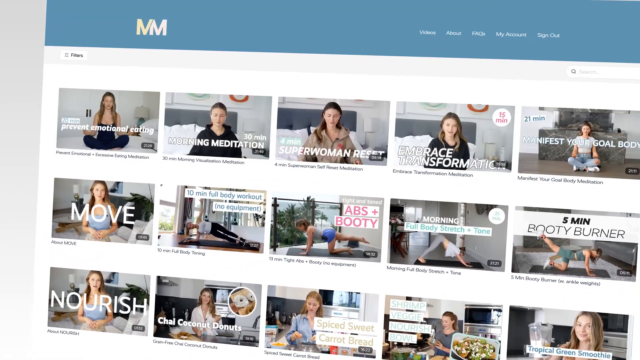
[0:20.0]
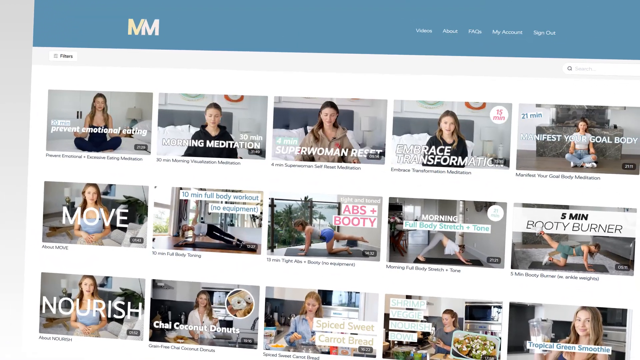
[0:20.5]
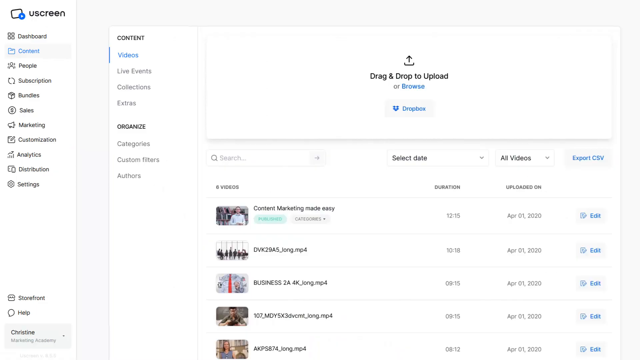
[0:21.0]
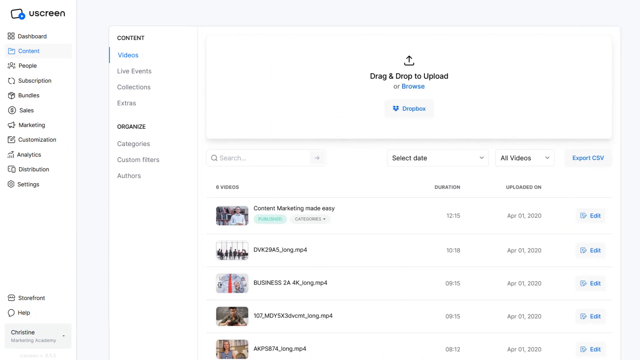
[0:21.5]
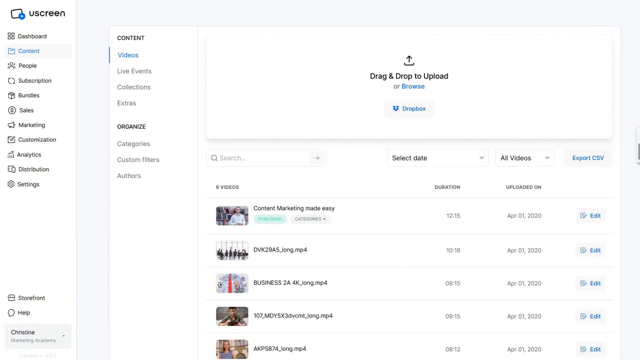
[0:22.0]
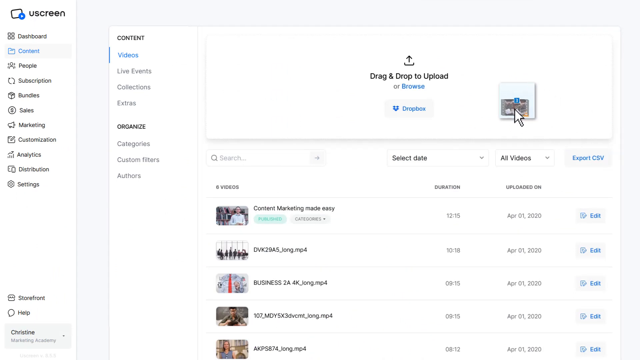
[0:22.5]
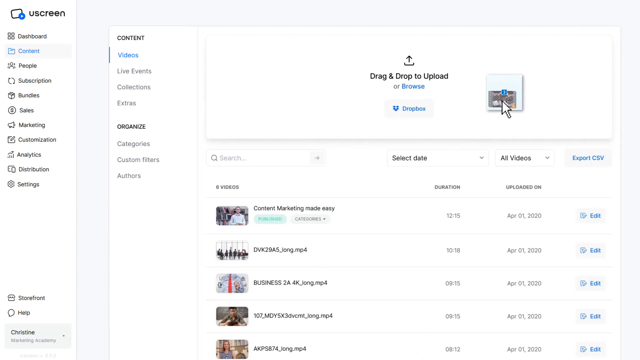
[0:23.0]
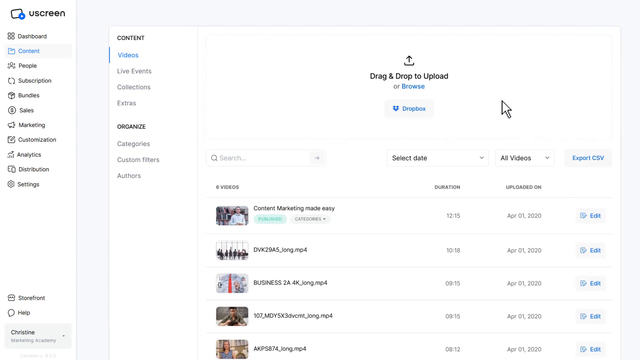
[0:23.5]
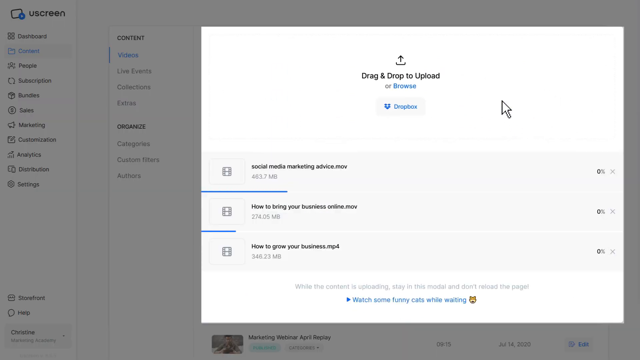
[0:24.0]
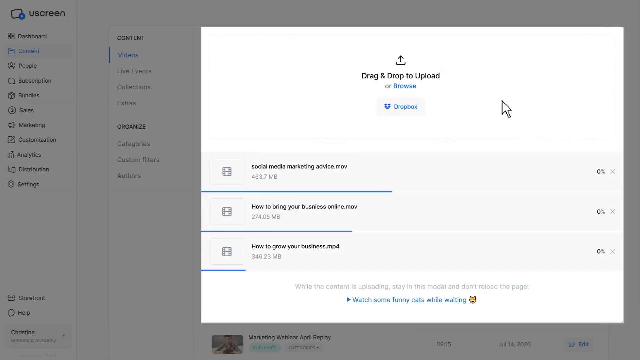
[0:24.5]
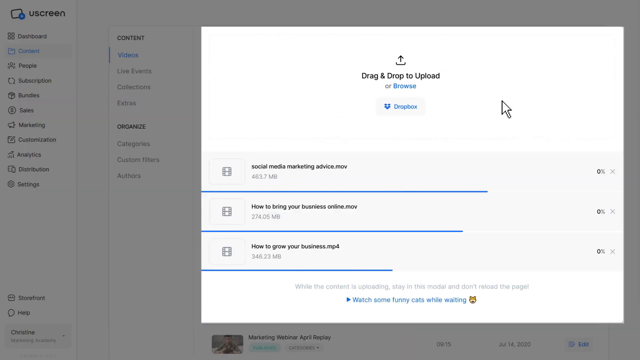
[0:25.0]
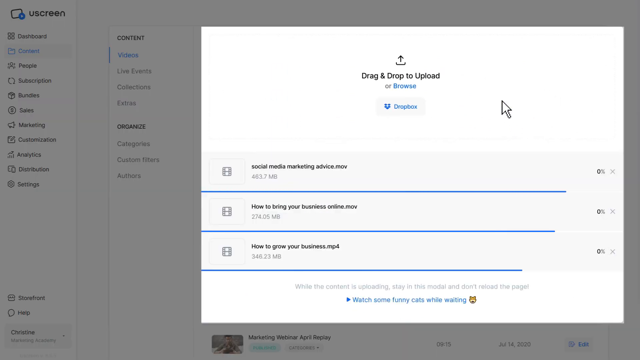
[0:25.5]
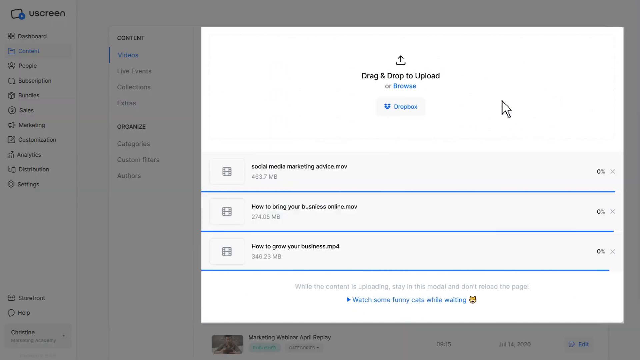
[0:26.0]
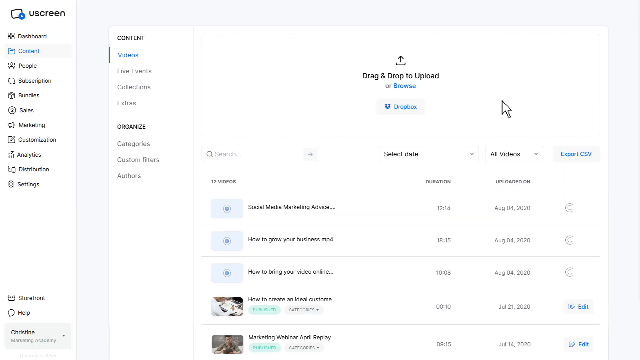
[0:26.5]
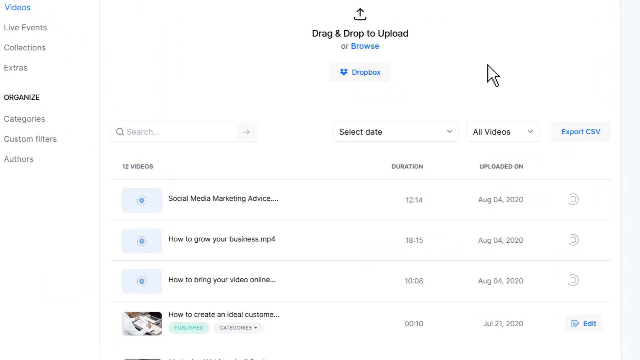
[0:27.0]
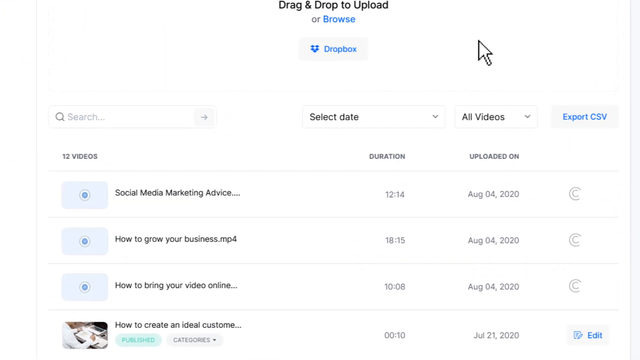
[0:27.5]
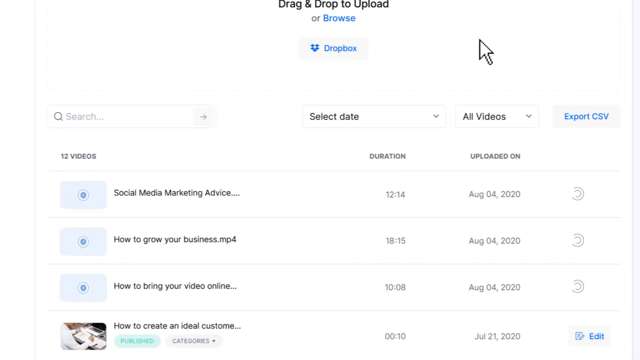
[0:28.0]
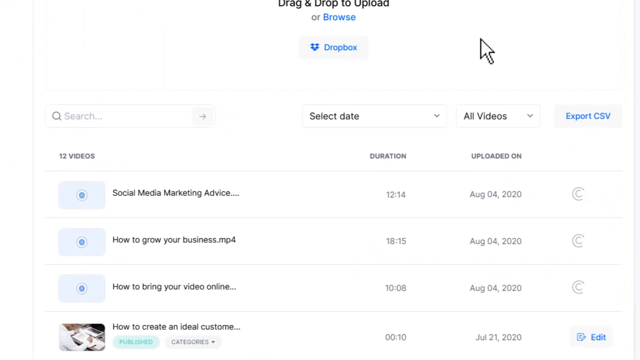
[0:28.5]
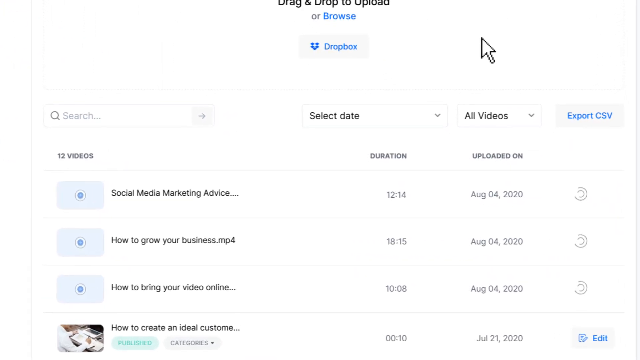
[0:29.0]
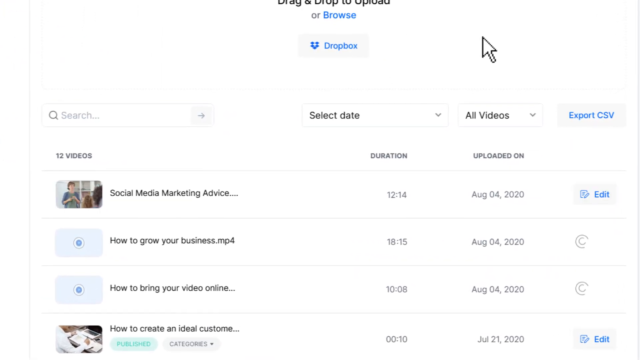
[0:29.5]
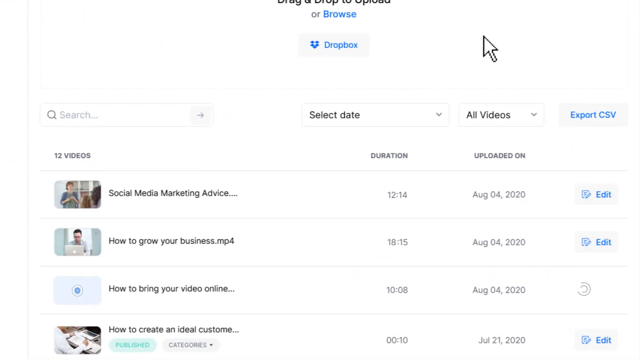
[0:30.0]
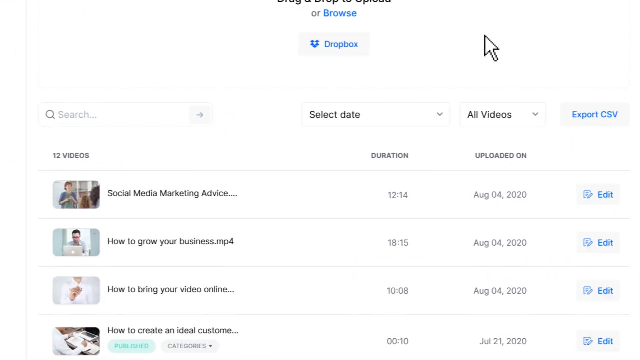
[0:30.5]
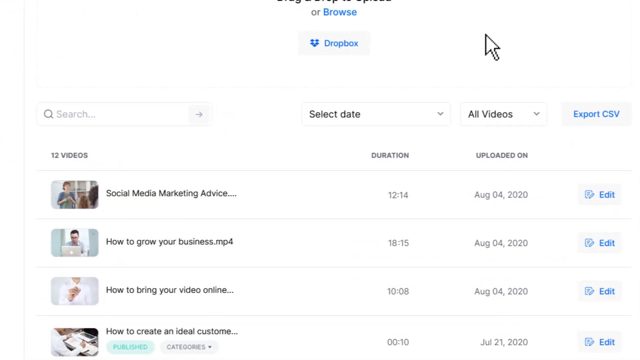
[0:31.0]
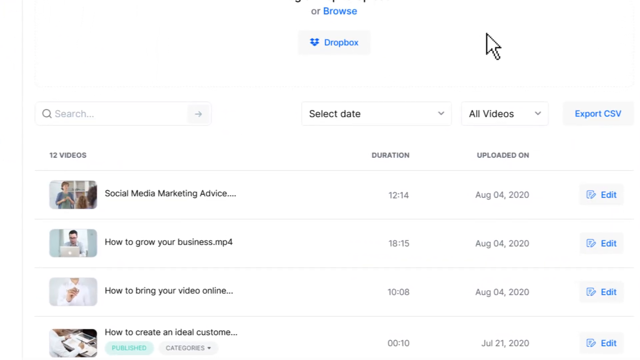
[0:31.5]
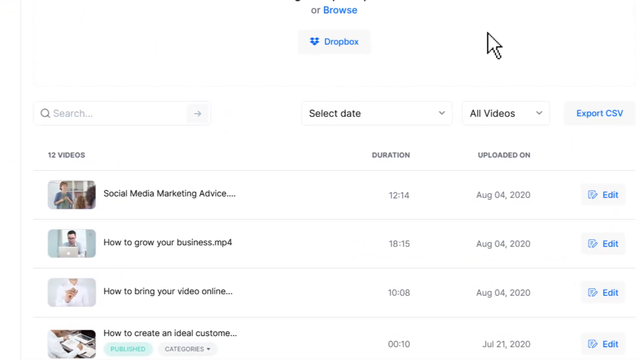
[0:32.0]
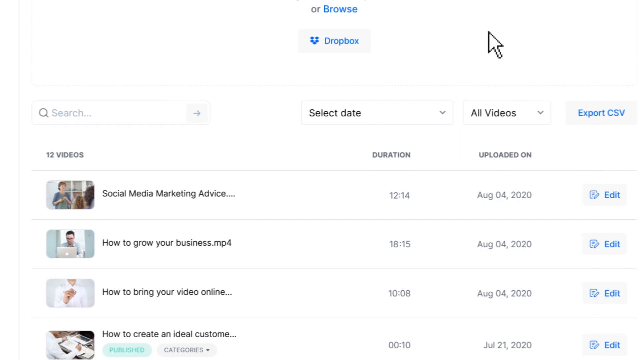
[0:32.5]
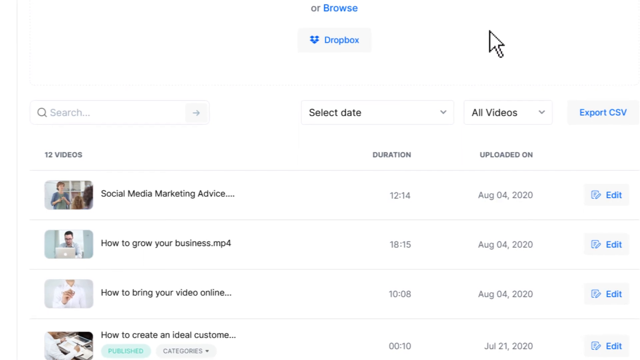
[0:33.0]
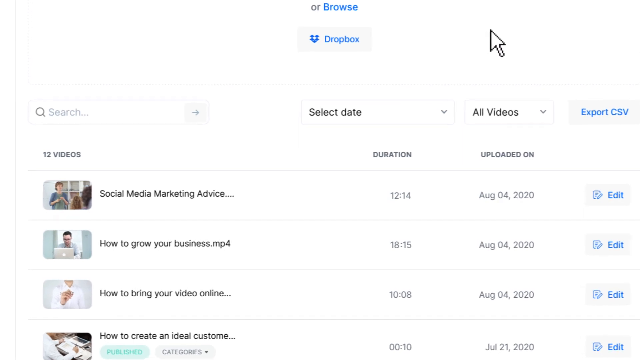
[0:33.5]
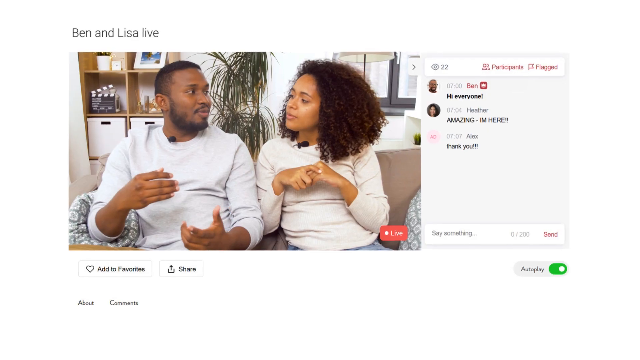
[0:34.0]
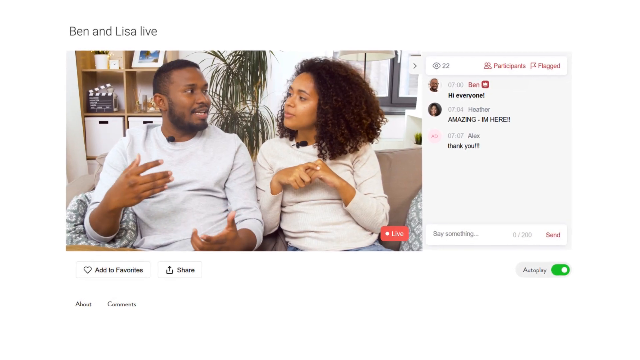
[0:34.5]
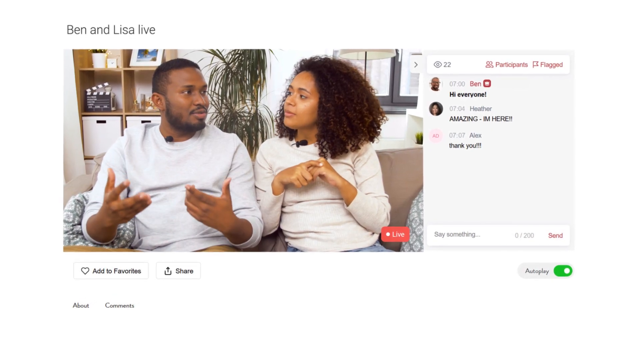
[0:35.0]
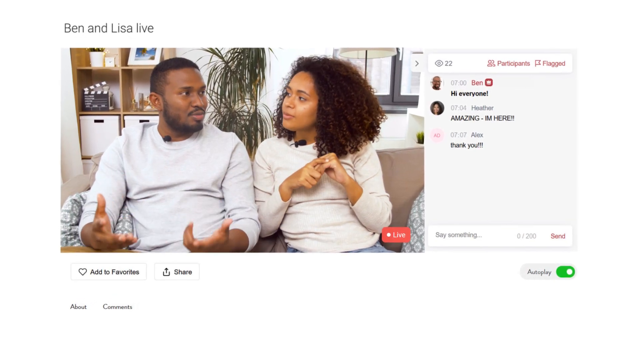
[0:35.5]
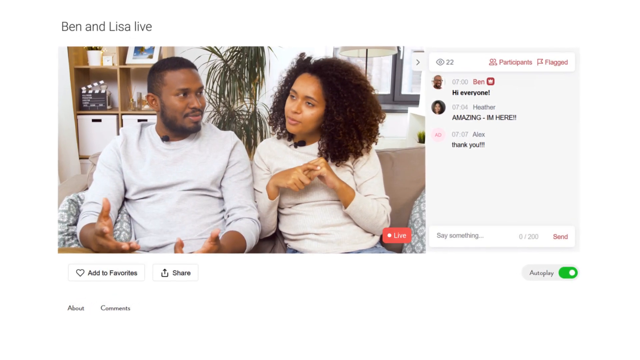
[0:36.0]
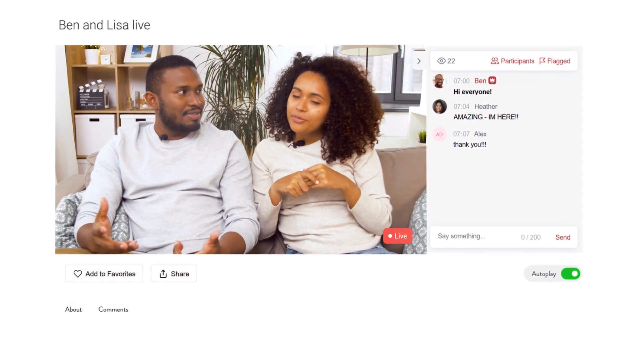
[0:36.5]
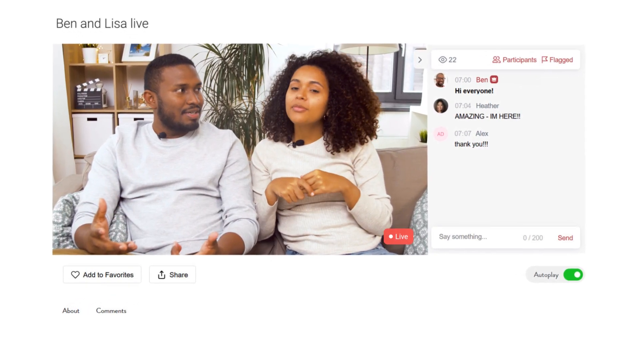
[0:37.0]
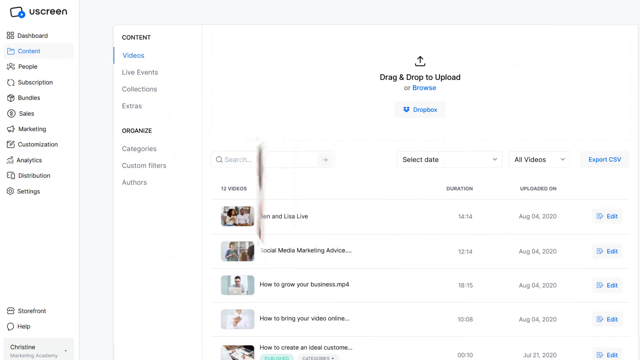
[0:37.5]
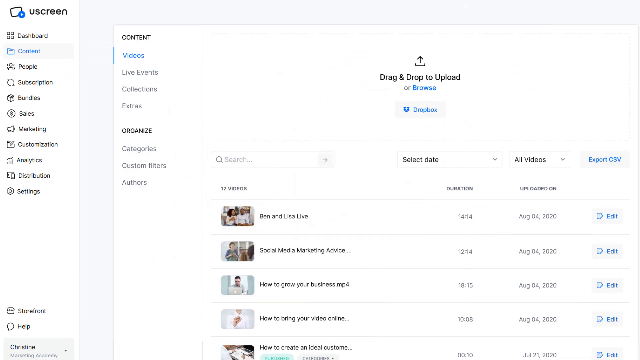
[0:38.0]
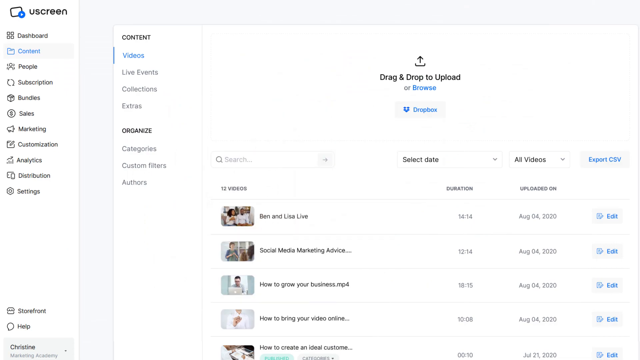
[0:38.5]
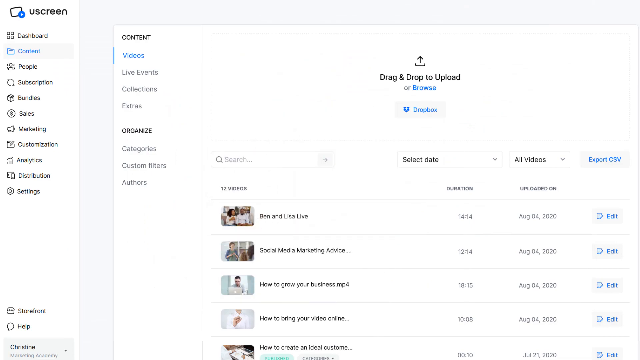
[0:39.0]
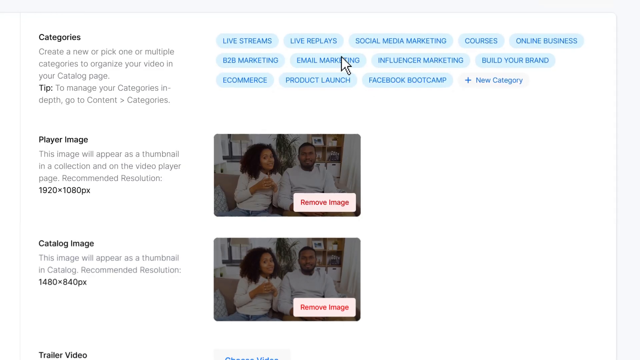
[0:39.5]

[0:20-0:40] The Mimi method website is shown, presenting a woman who has created her own exercise program for helping people reach their goals. There is an area to drag and drop to upload or browse. The site lists segments with their duration and date; most of the videos are from 2020. A cursor on the screen points upward. Videos of a Black couple, Ben and Lisa, appear under "Ben and Lisa live"; they are doing a podcast, "live" is shown in red, and other people are saying hello and thank you. This live podcast is the first option on the website, which shows available podcasts as well as her own videos.